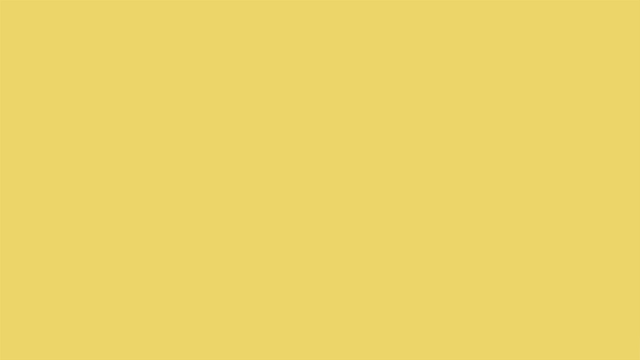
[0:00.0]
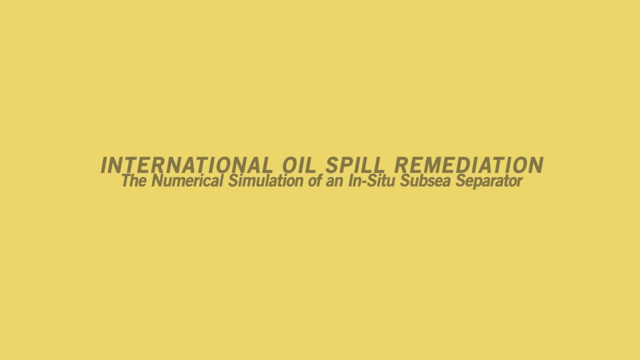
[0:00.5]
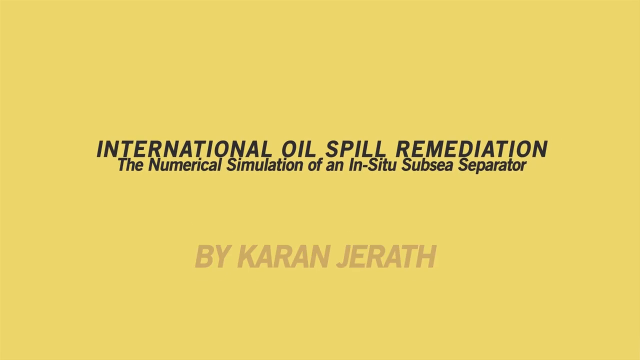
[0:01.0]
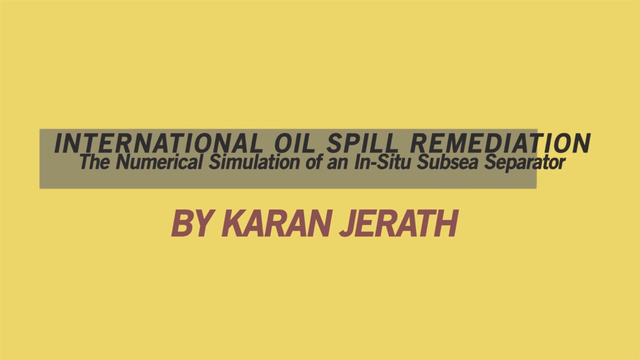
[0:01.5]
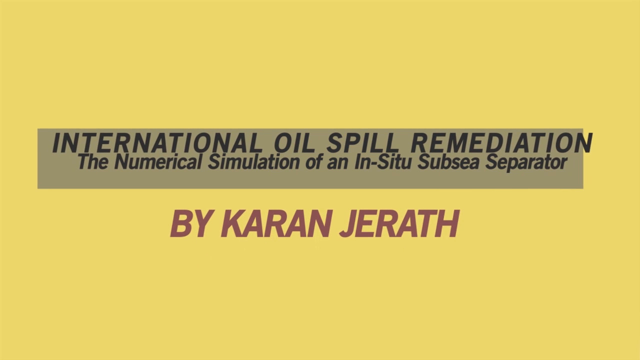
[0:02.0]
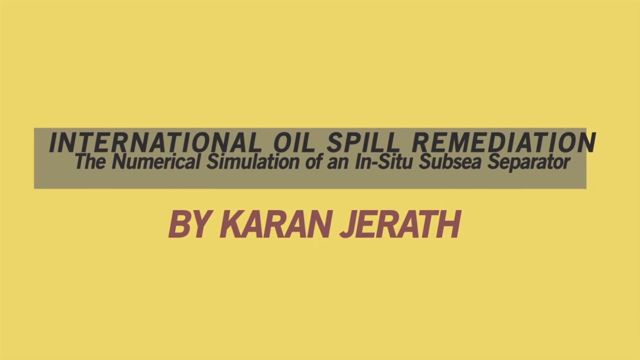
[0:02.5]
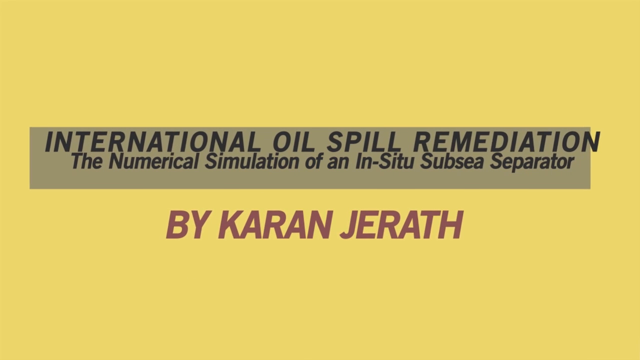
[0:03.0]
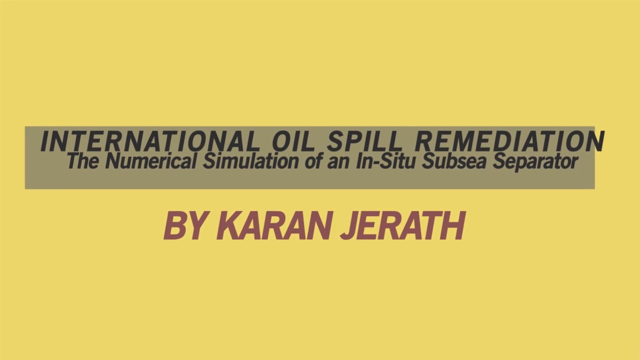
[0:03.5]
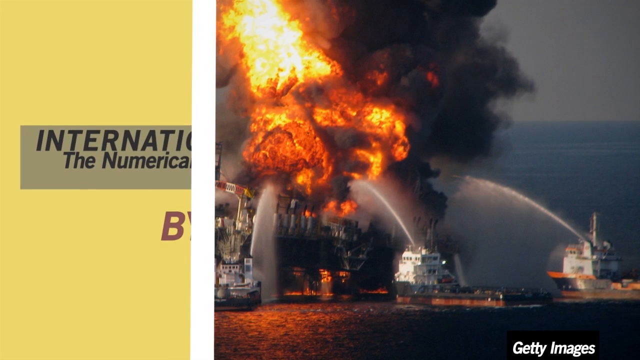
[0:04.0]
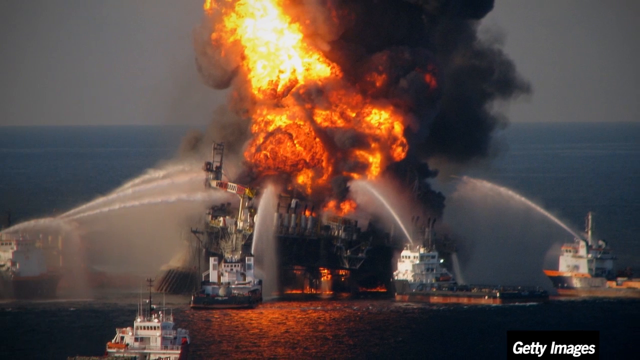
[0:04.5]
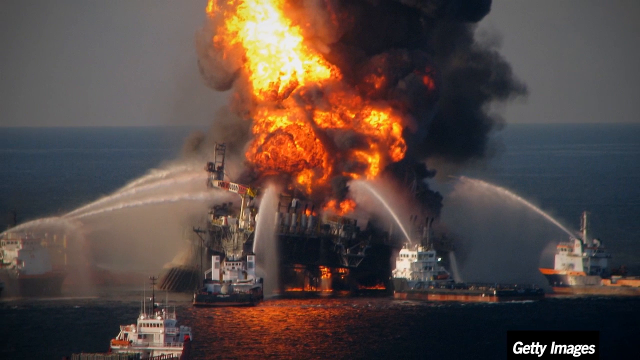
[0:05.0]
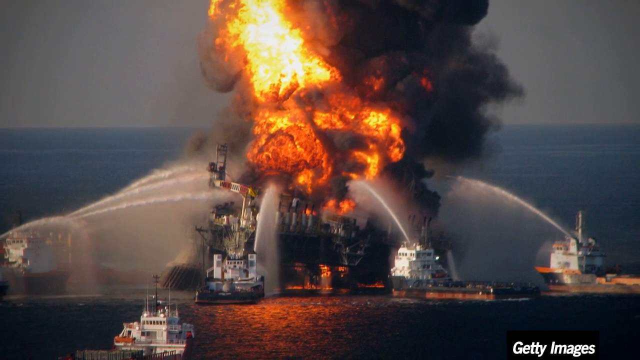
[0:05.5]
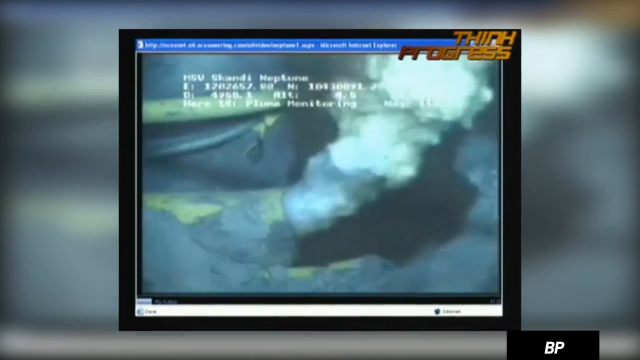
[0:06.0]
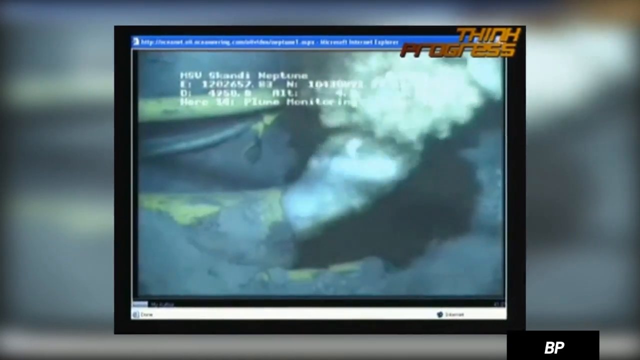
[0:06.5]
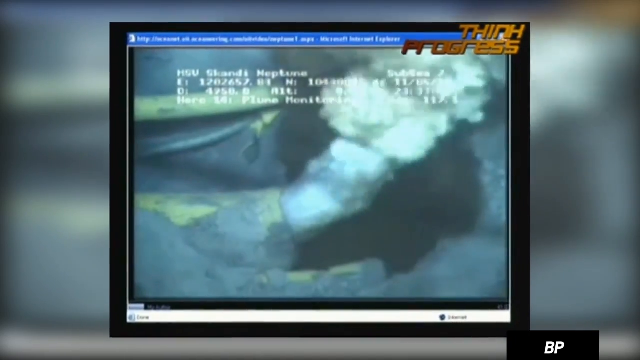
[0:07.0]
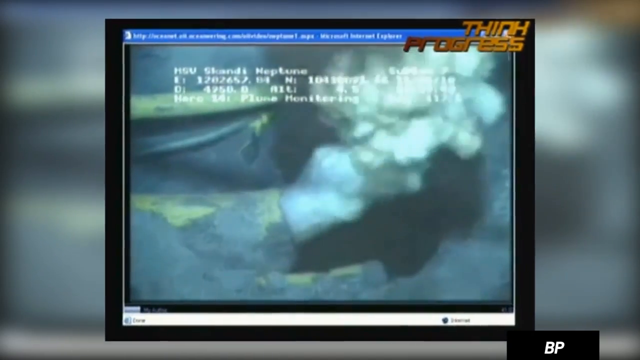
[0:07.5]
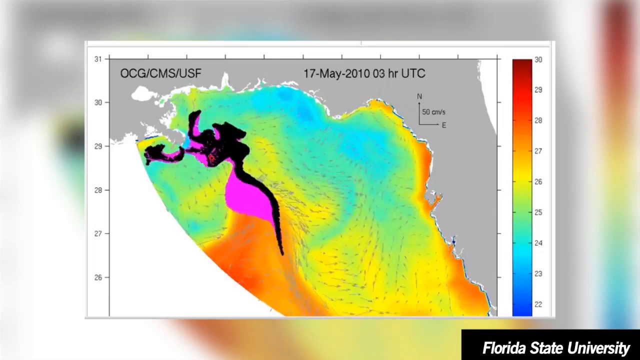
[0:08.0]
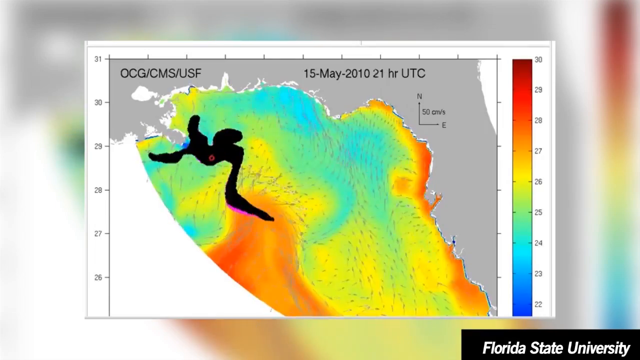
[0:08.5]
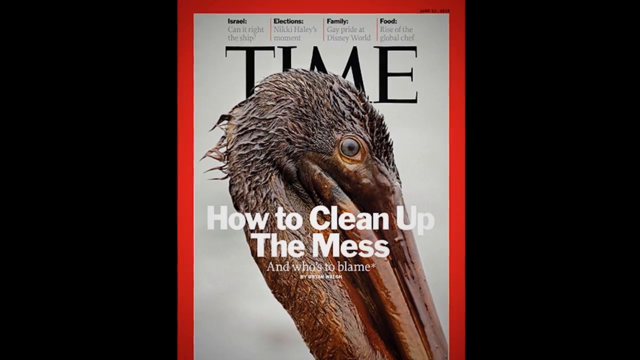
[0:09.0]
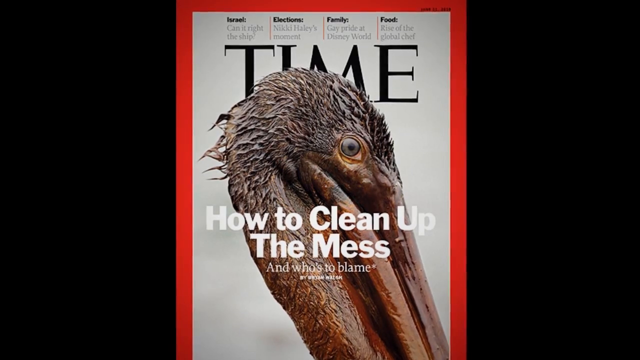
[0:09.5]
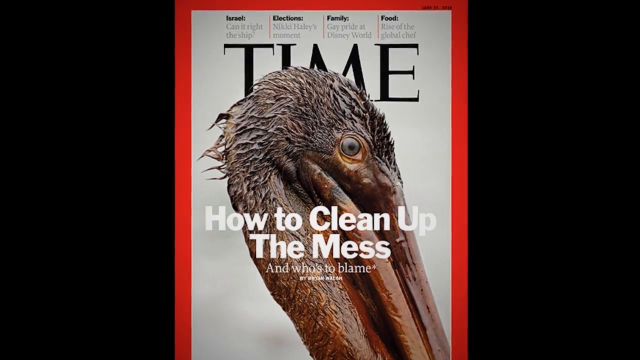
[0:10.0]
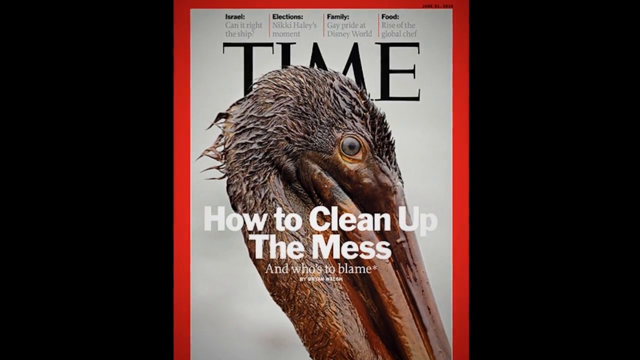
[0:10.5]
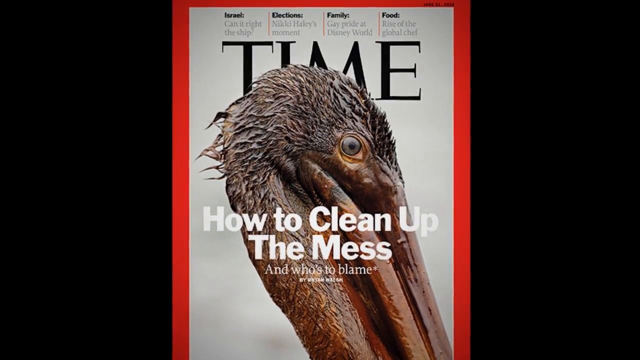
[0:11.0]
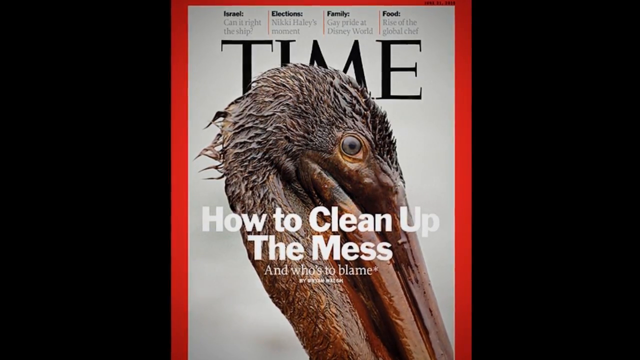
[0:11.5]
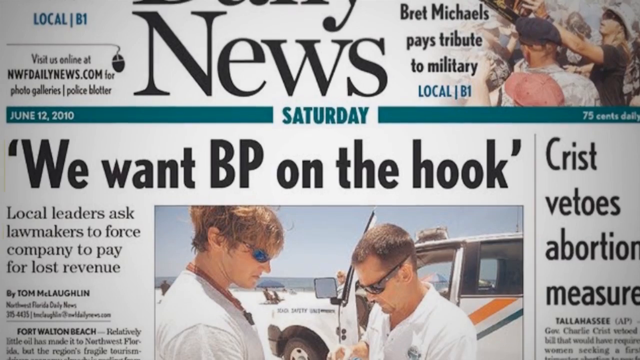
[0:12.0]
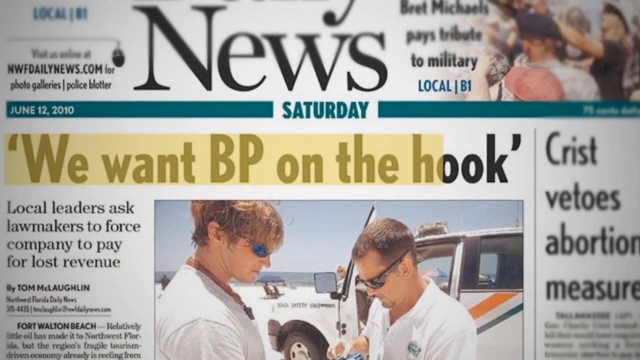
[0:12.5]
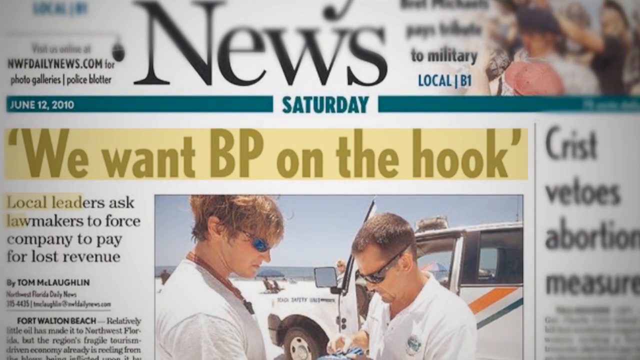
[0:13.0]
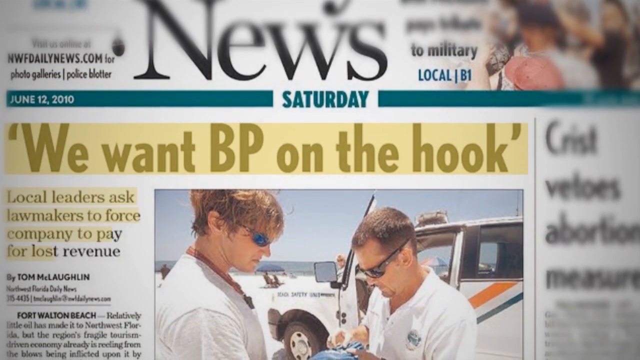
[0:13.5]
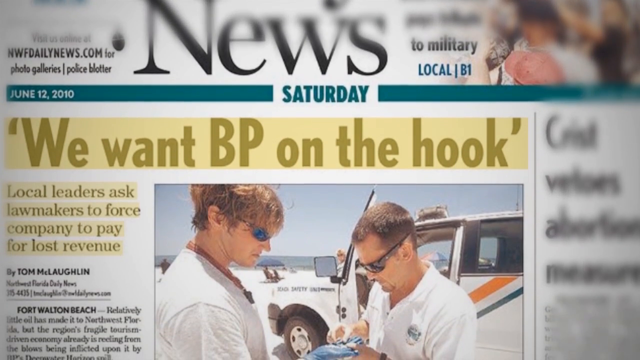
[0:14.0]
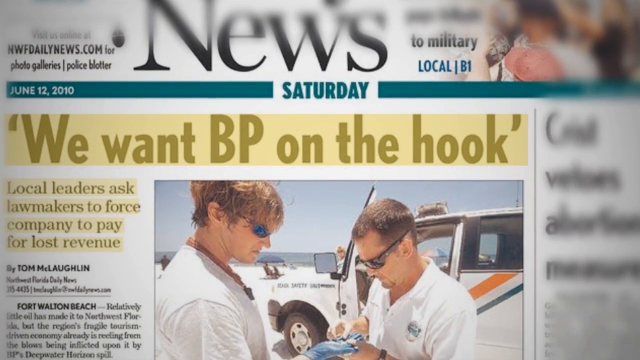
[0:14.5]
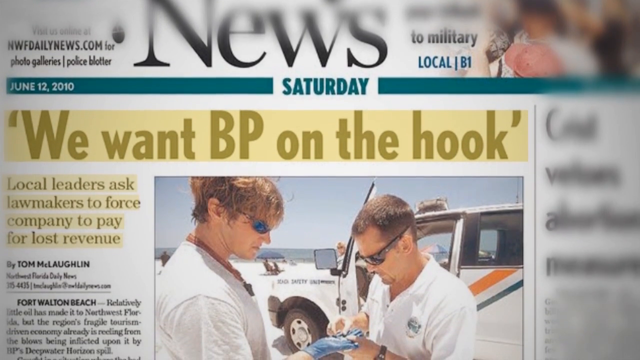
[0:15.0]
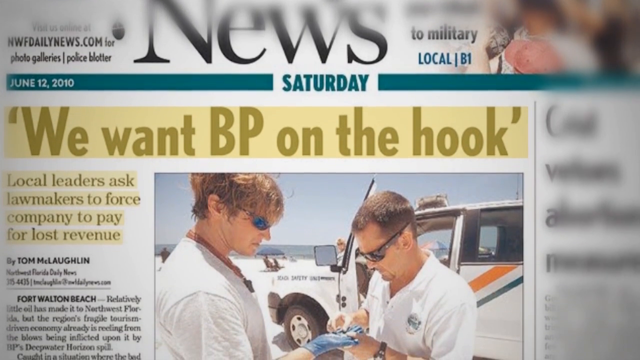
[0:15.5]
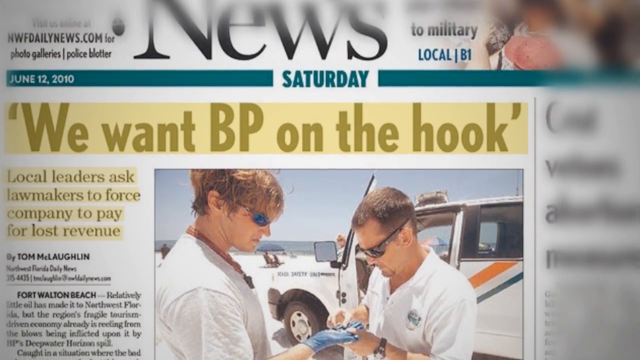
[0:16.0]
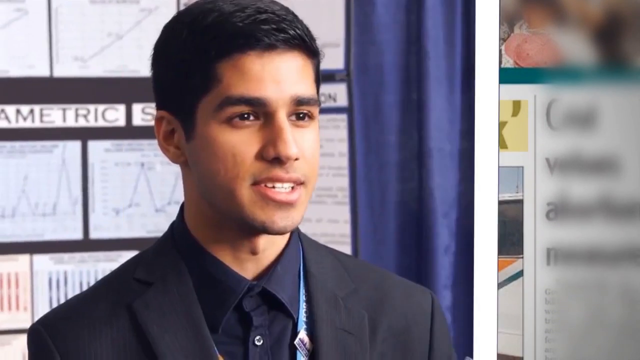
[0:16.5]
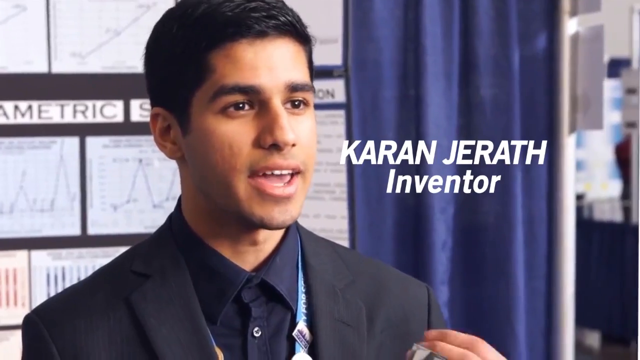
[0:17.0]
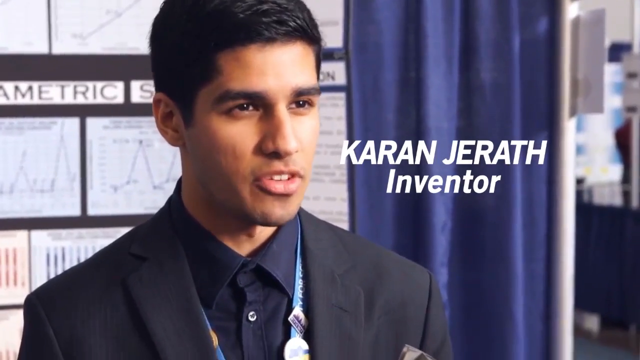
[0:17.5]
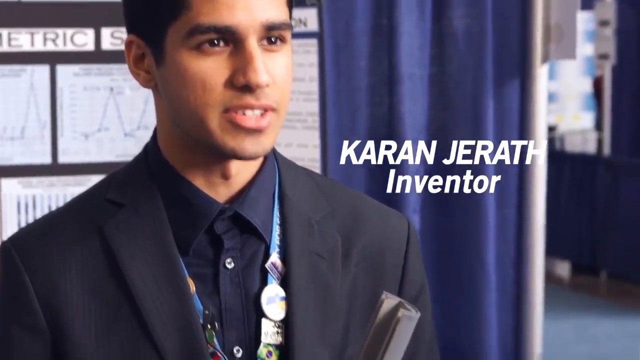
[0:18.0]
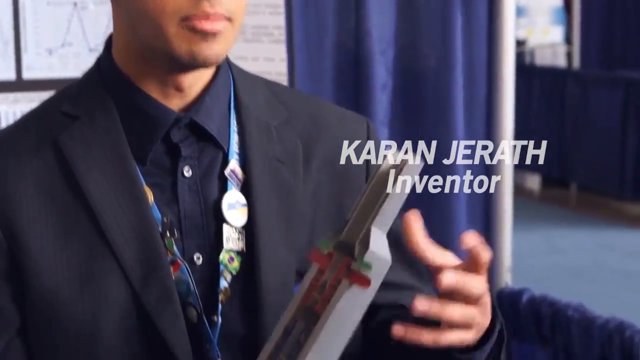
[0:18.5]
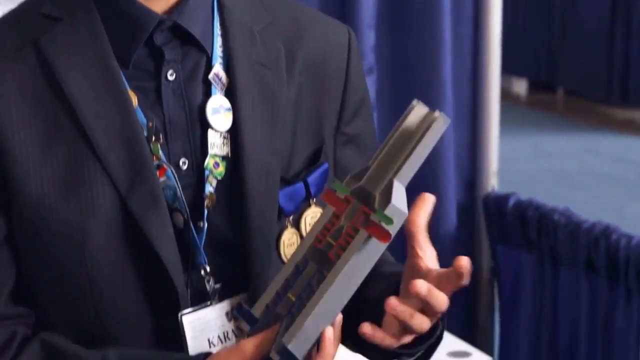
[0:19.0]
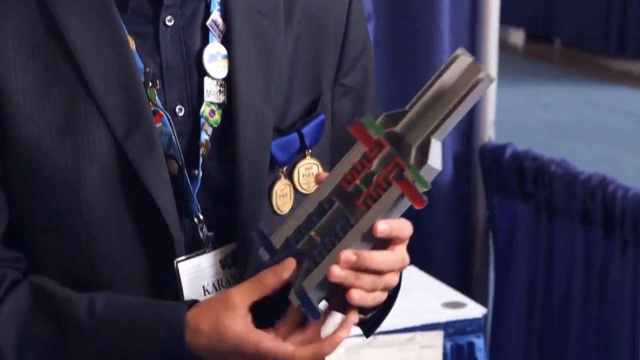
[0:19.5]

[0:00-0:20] The video appears to concern international oil spill remediation and how to clean up the mess. There is fire, and it looks like an industry on fire. A newspaper appears, apparently about what happened and how to clean up the mess. An inventor, a young man around his 20s, seems calm and cool as he explains.